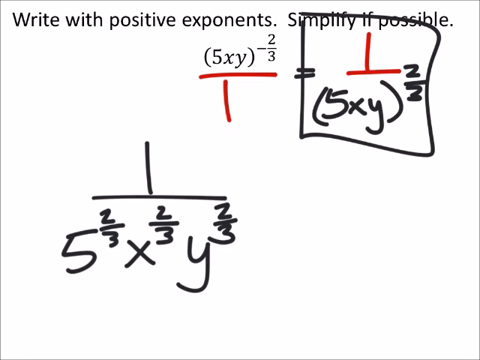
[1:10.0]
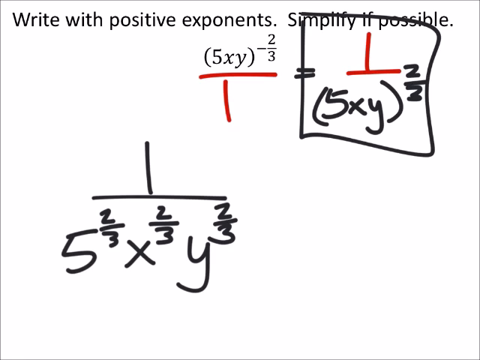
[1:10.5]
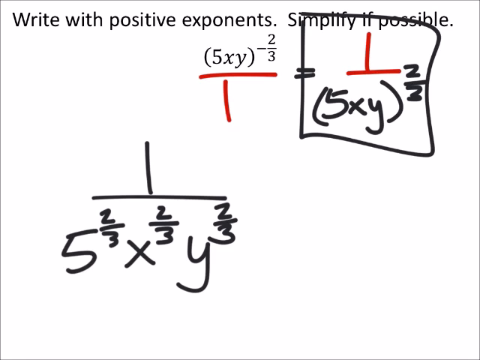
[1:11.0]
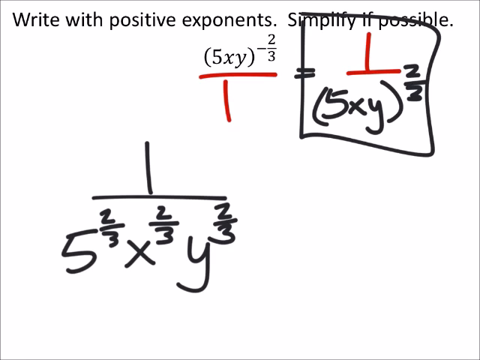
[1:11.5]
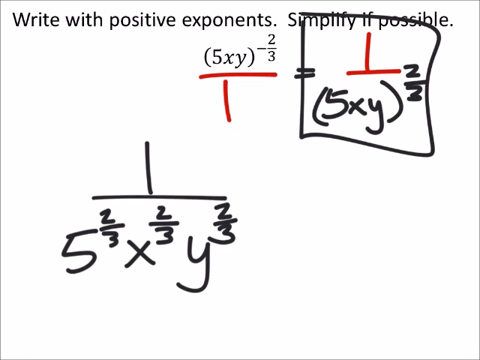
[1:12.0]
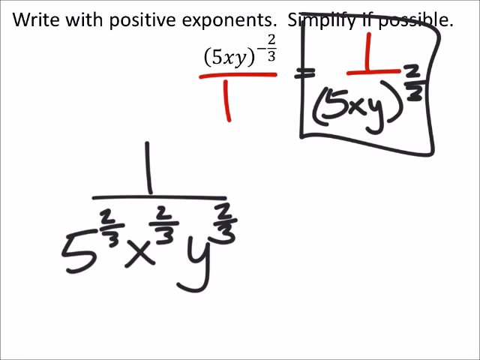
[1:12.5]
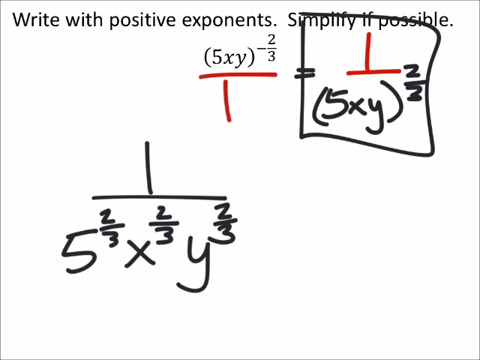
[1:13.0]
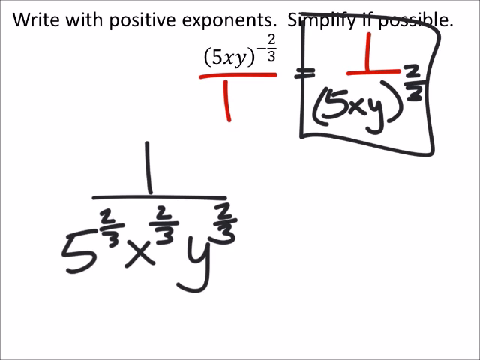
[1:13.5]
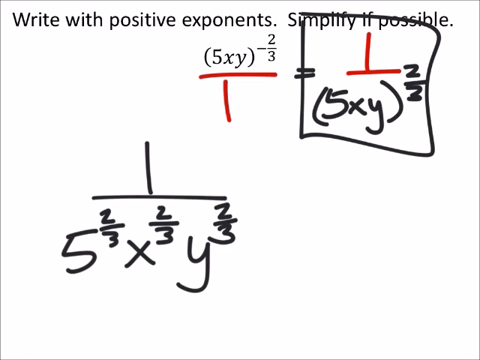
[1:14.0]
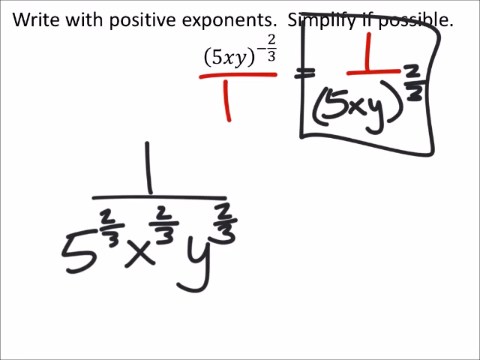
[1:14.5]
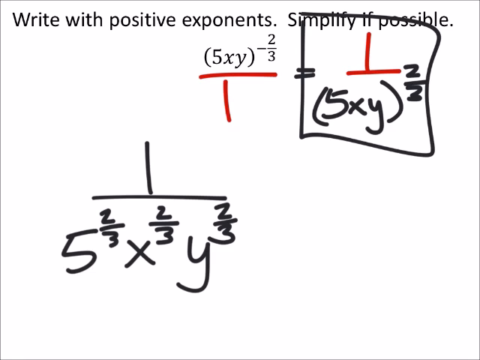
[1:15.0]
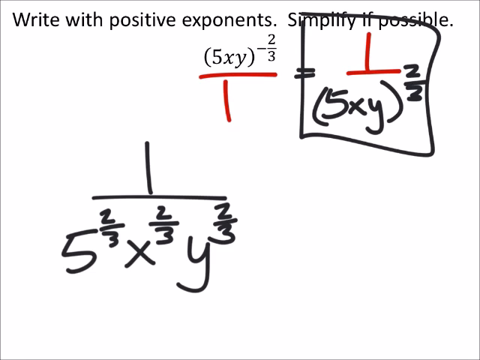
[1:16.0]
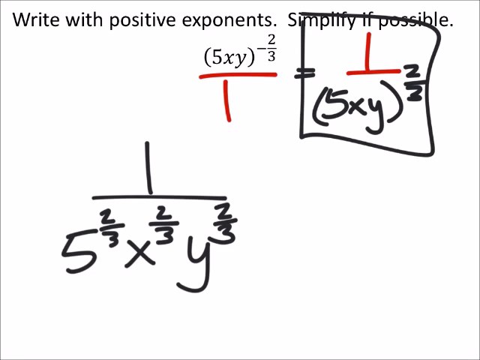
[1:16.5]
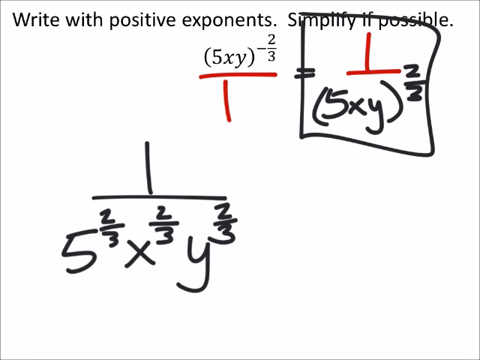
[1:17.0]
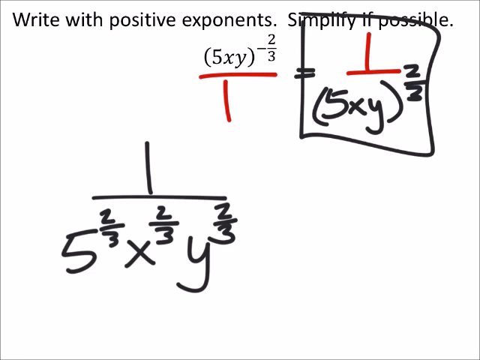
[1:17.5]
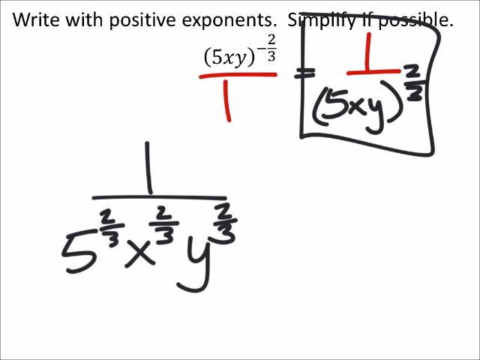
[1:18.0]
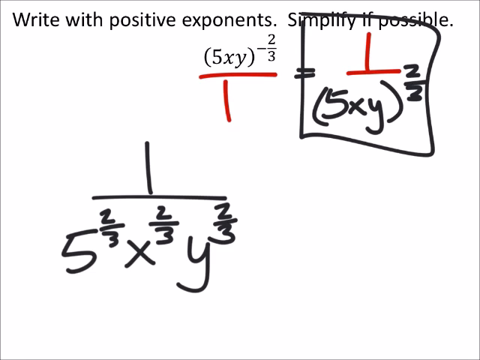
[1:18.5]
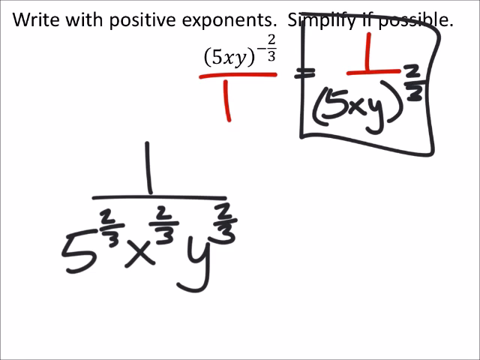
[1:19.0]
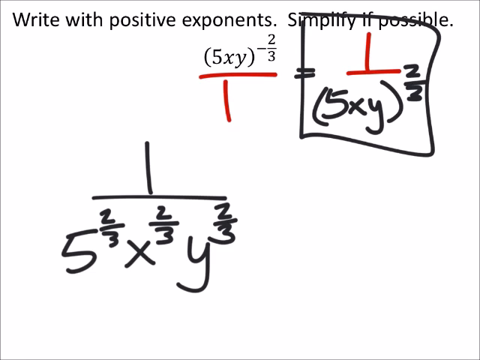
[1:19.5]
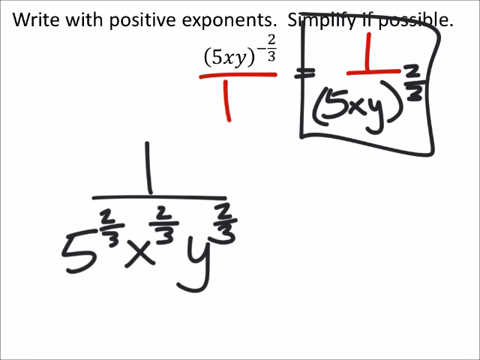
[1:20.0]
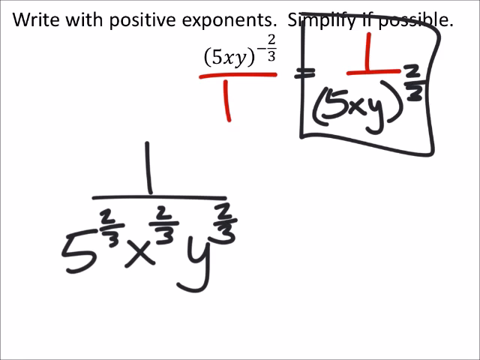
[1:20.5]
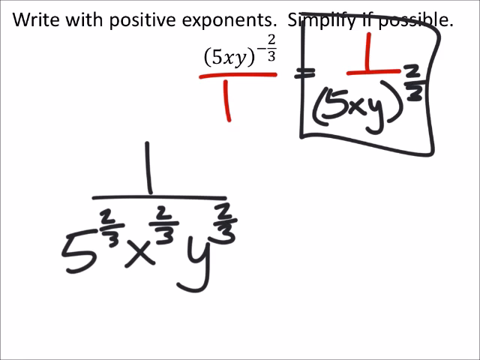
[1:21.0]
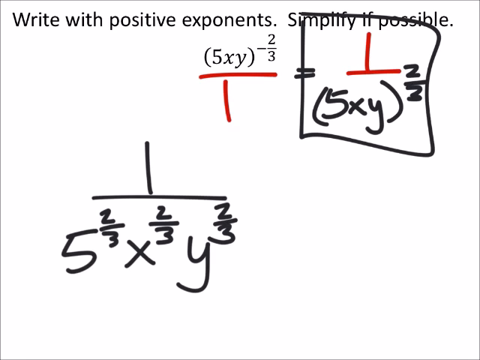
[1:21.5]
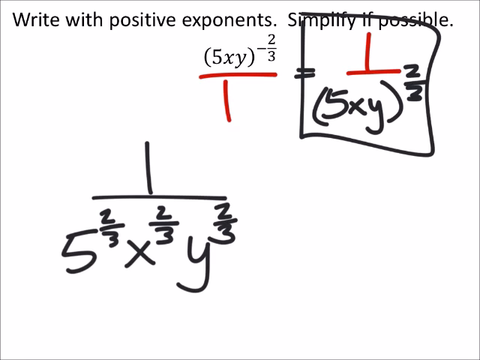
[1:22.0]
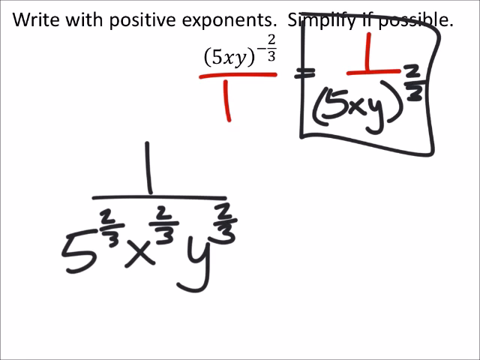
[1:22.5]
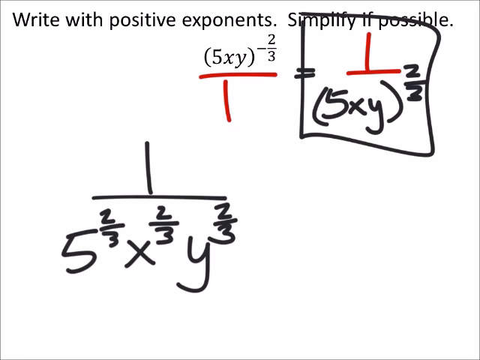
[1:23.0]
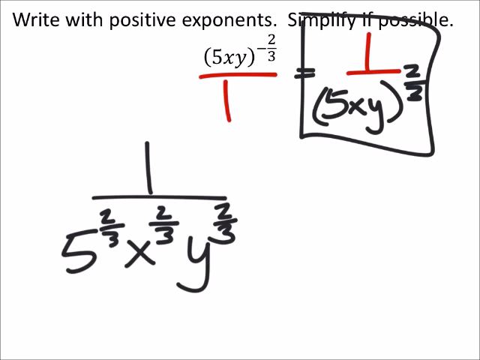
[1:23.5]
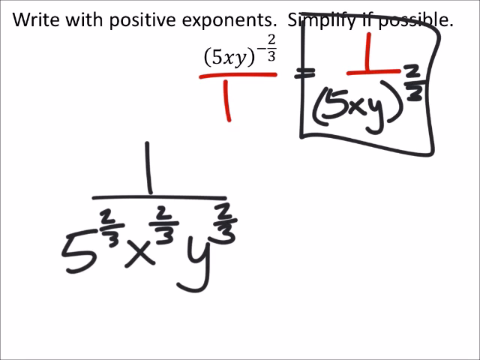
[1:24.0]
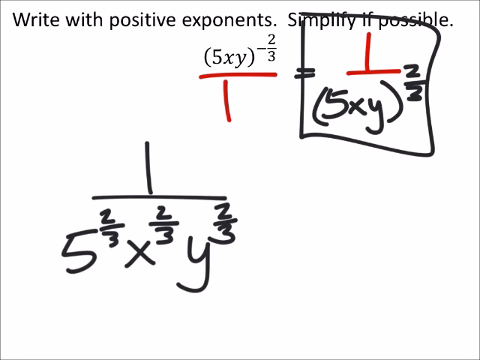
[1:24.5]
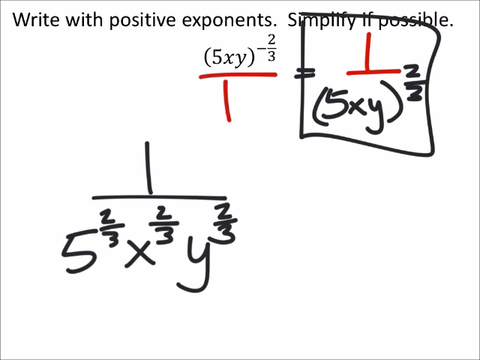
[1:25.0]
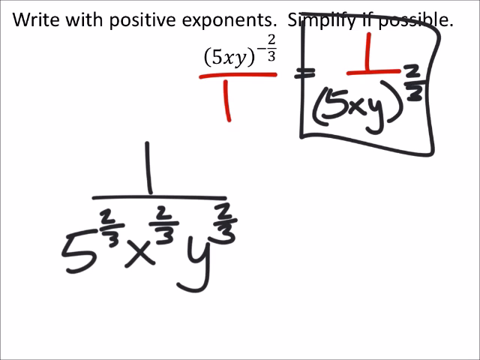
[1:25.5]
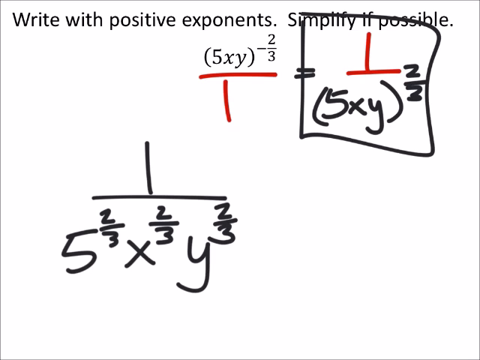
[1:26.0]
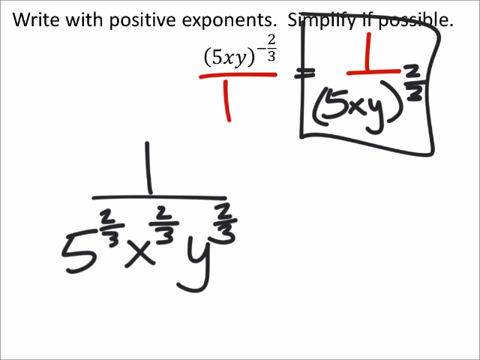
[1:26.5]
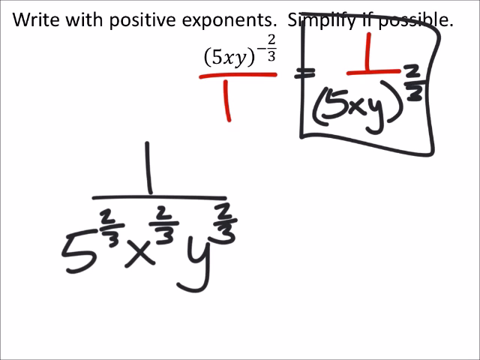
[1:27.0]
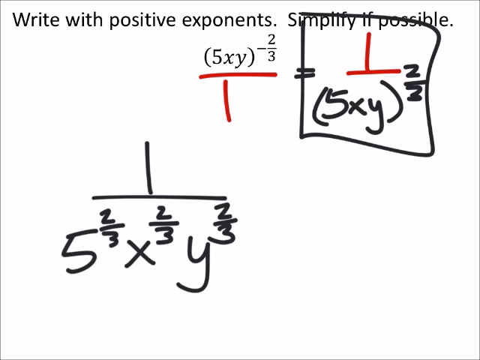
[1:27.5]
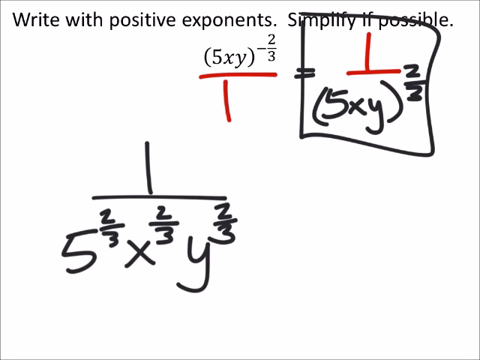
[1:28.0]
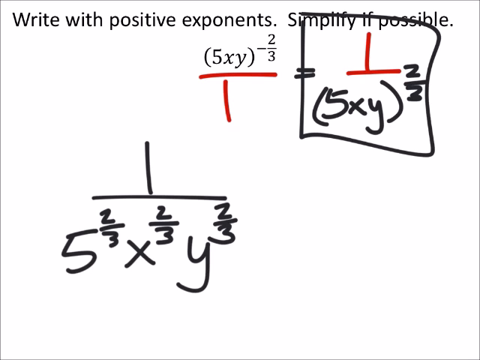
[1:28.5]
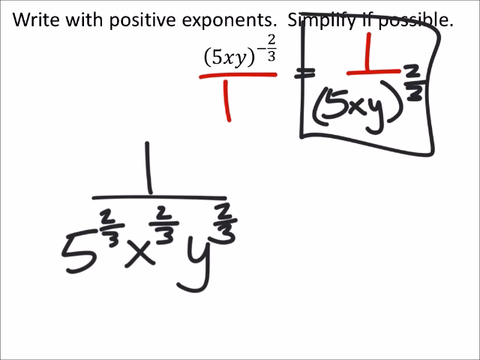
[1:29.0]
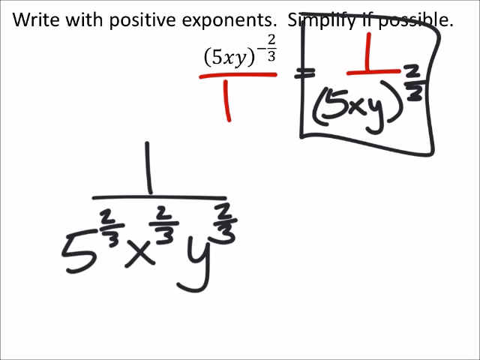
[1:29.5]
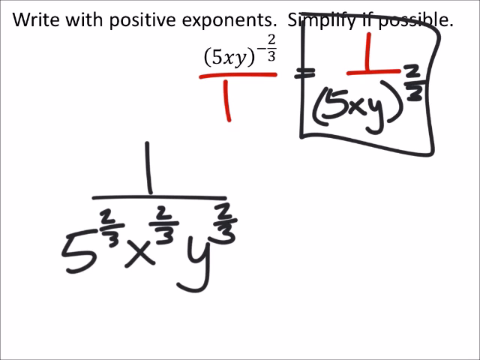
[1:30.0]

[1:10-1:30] Nothing changes while the answer remains on the screen. At the very last second the screen changes to show the rules for exponents: six rules, including the product, quotient and zero exponent rules, the negative exponent rule and the power of a product rule, the last two being the ones relevant to this problem.